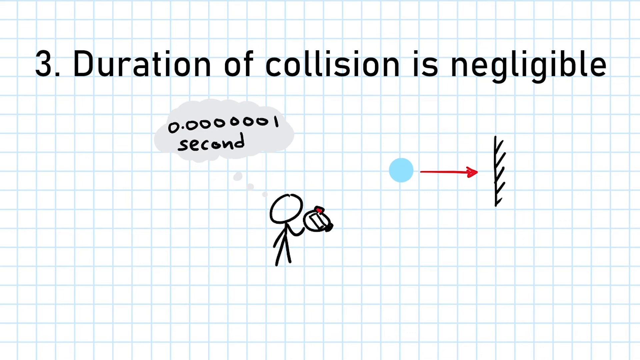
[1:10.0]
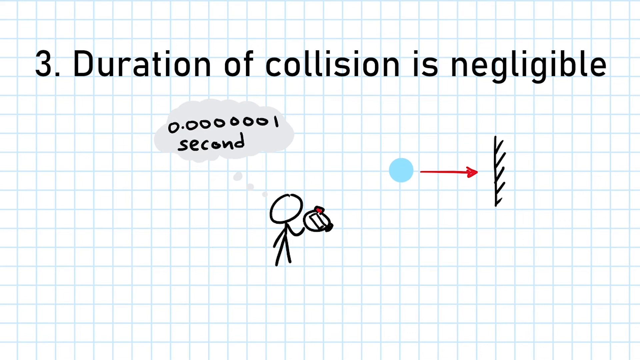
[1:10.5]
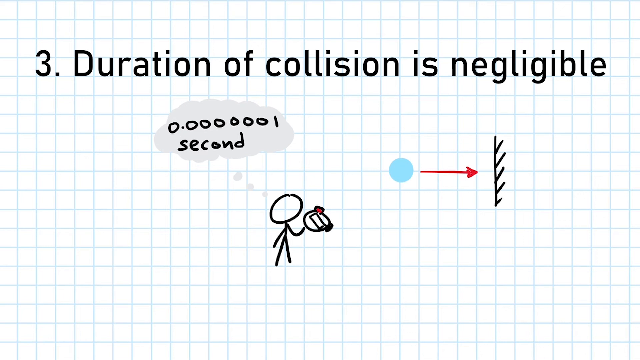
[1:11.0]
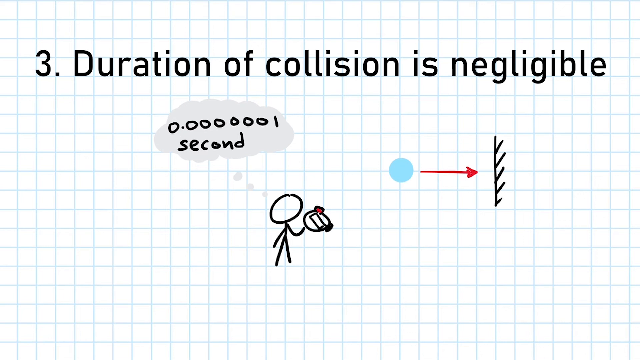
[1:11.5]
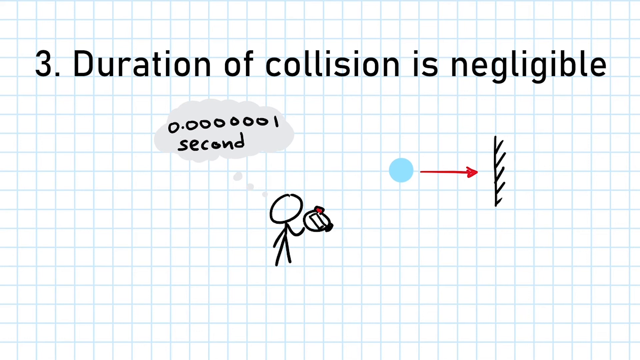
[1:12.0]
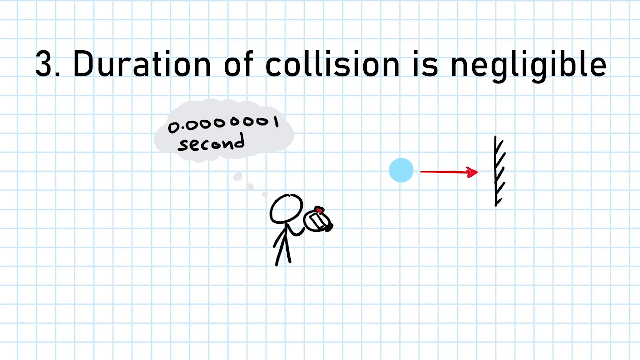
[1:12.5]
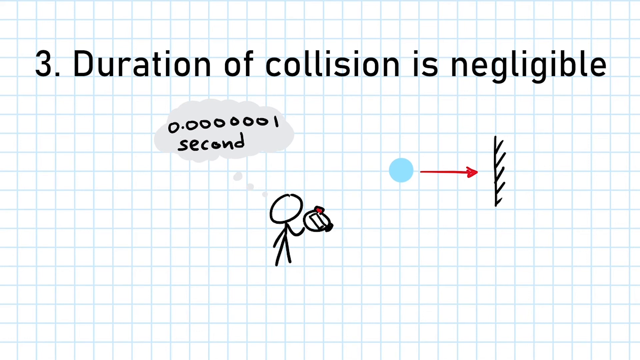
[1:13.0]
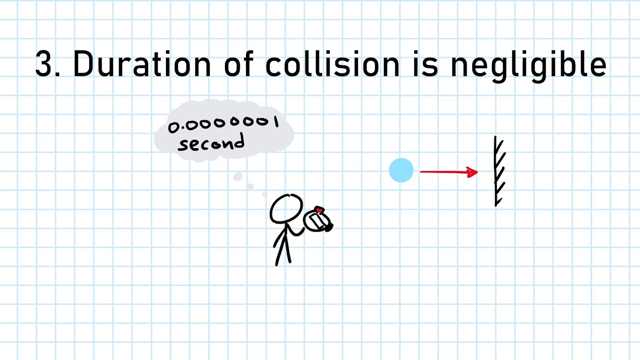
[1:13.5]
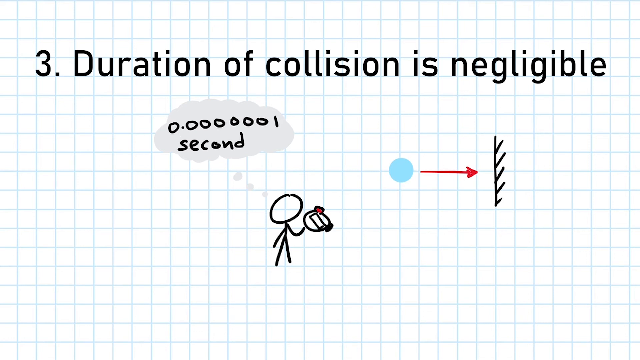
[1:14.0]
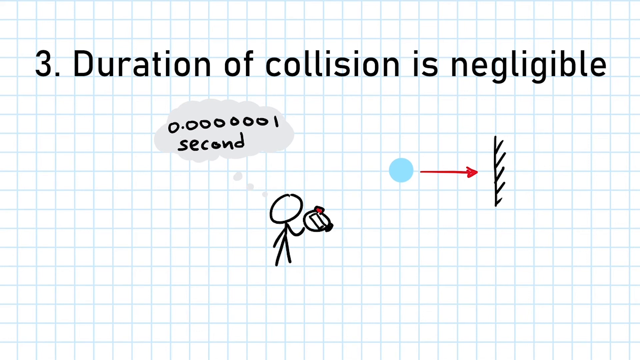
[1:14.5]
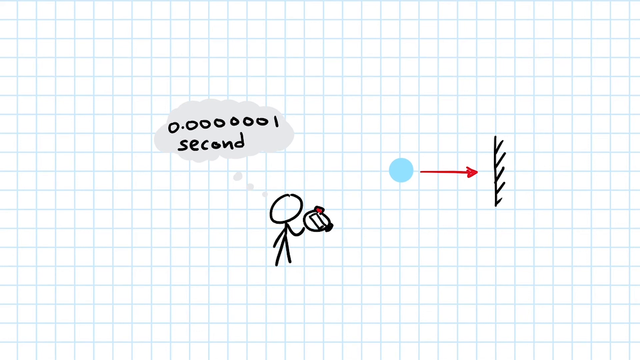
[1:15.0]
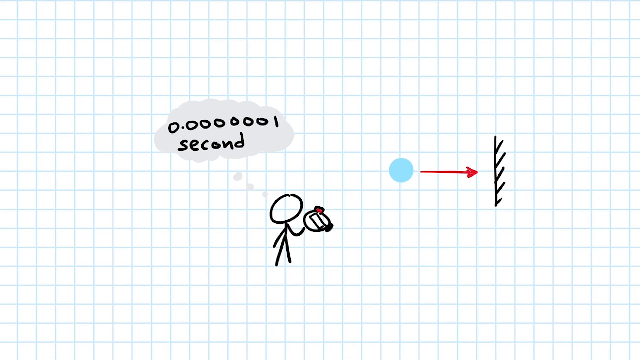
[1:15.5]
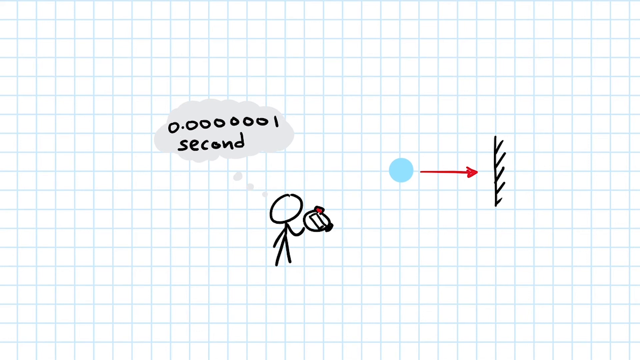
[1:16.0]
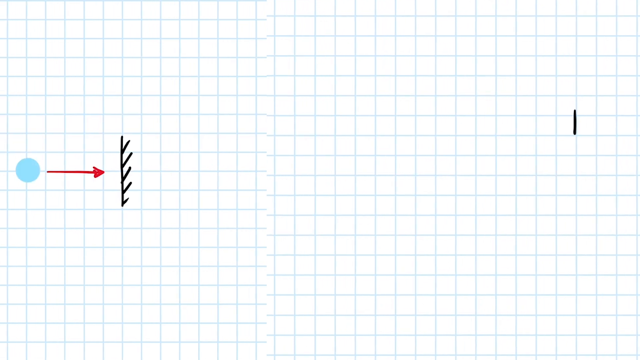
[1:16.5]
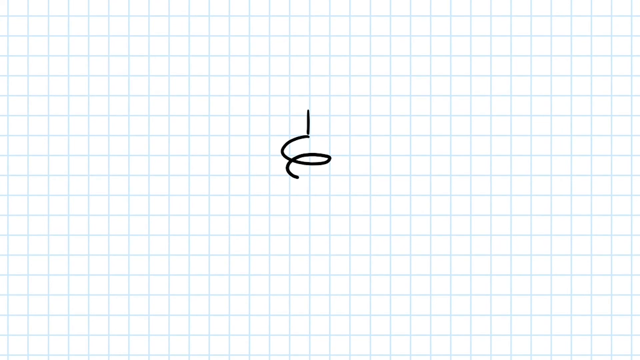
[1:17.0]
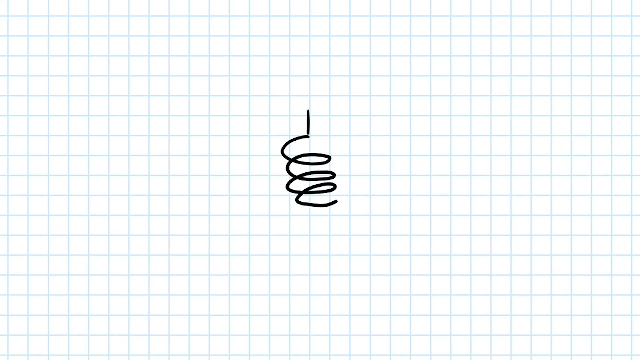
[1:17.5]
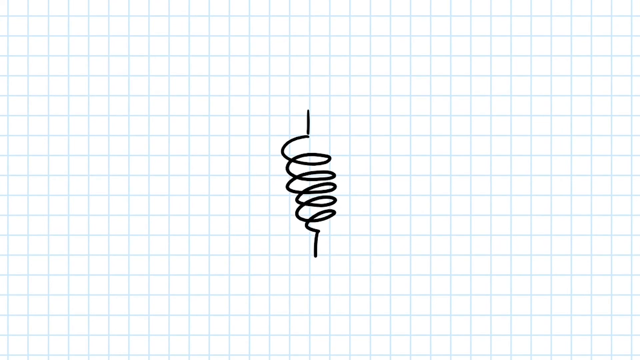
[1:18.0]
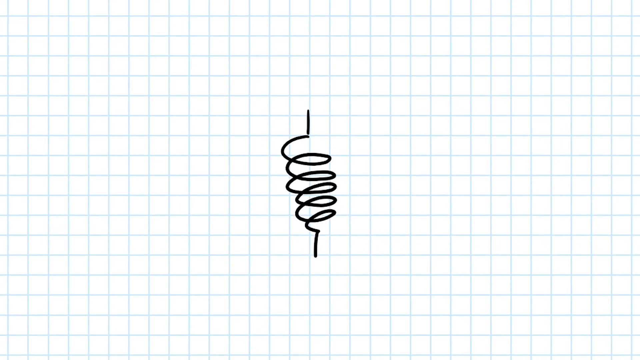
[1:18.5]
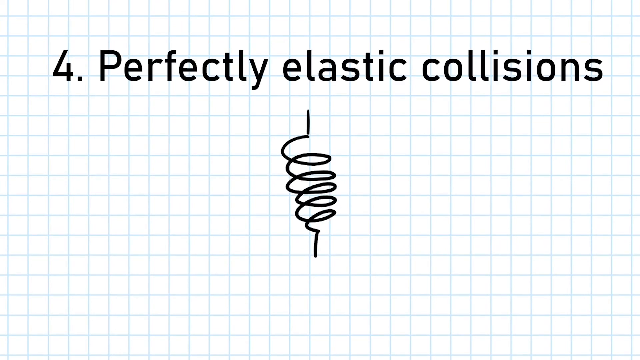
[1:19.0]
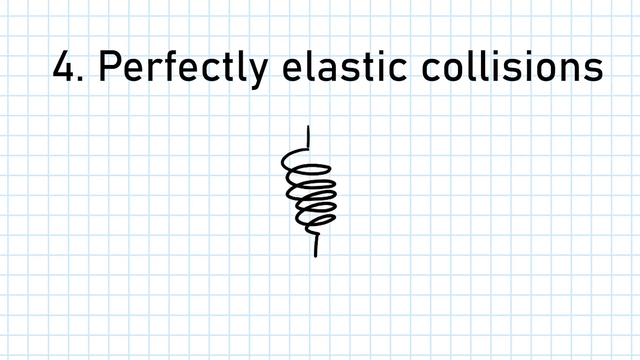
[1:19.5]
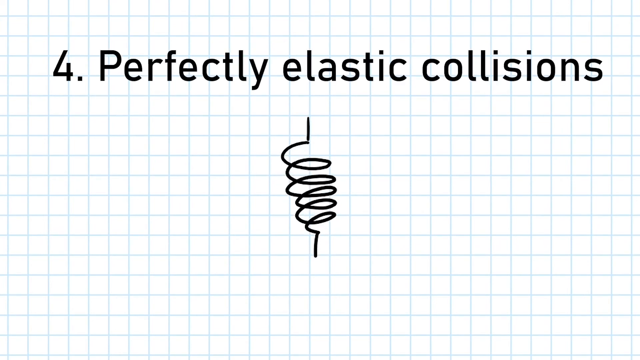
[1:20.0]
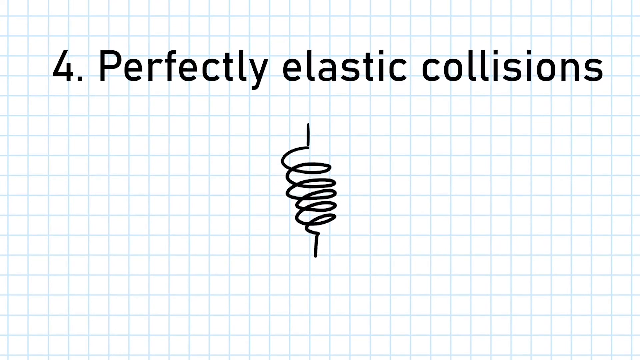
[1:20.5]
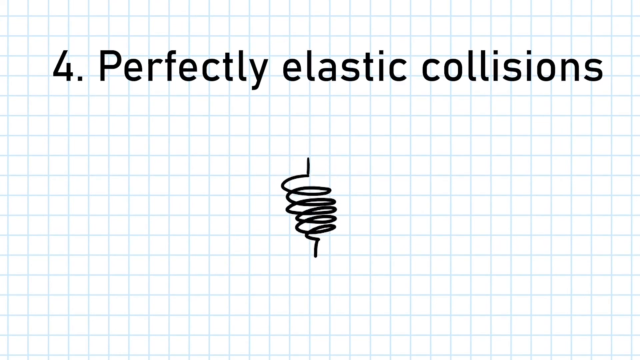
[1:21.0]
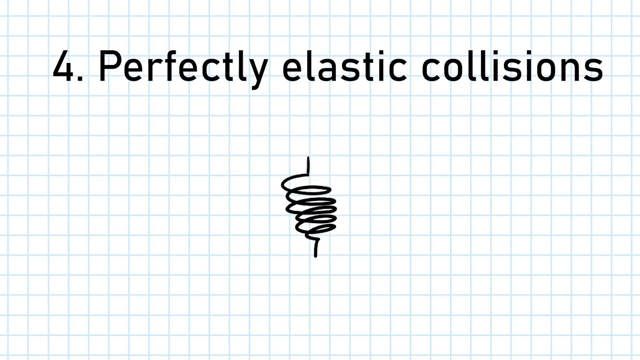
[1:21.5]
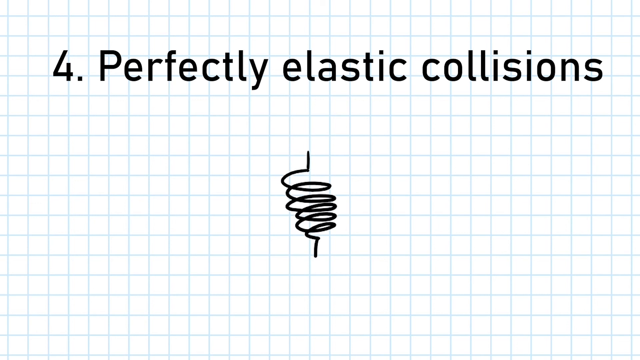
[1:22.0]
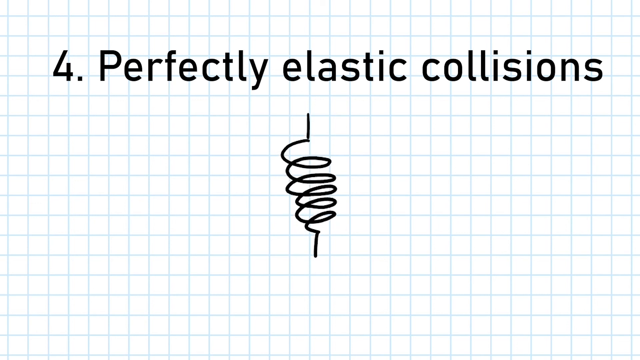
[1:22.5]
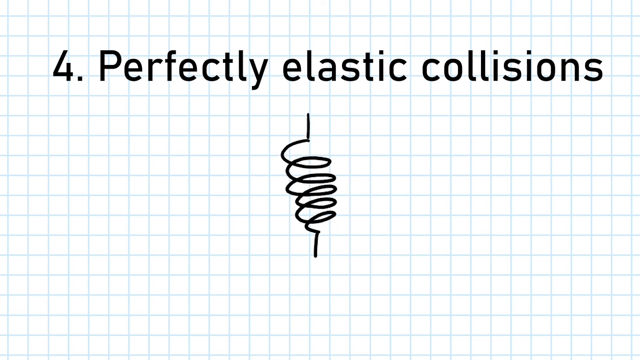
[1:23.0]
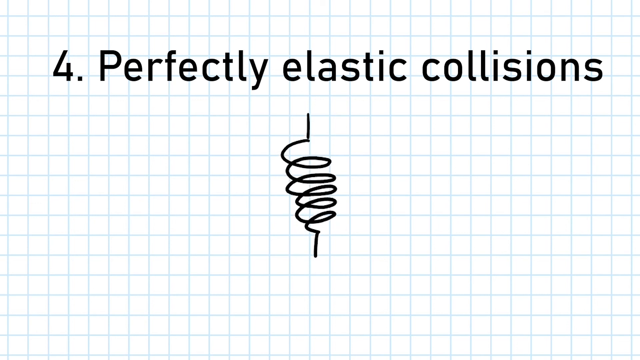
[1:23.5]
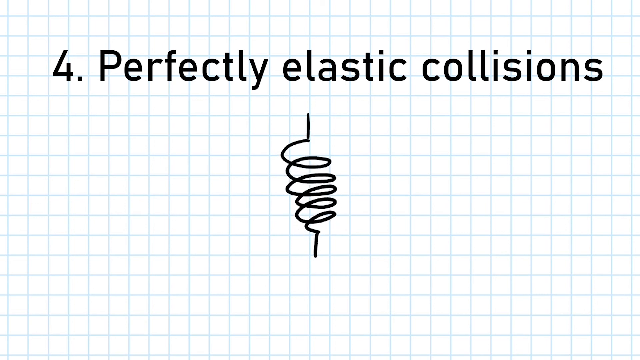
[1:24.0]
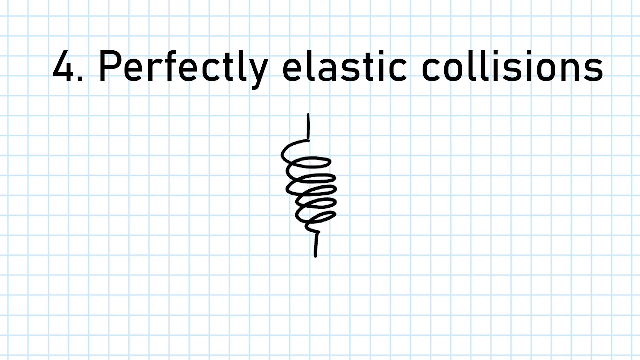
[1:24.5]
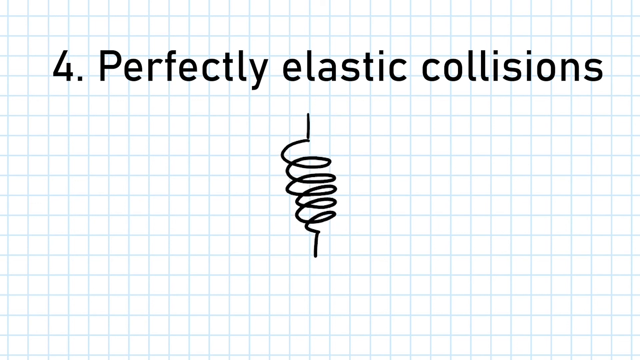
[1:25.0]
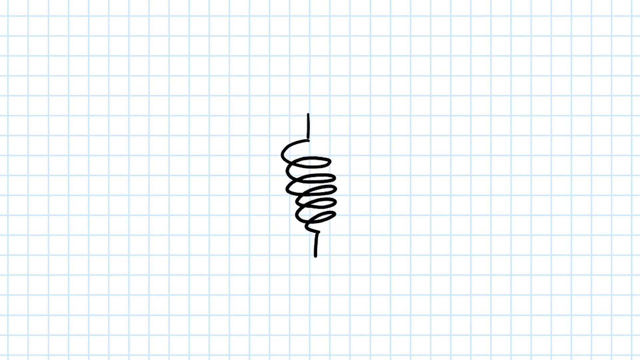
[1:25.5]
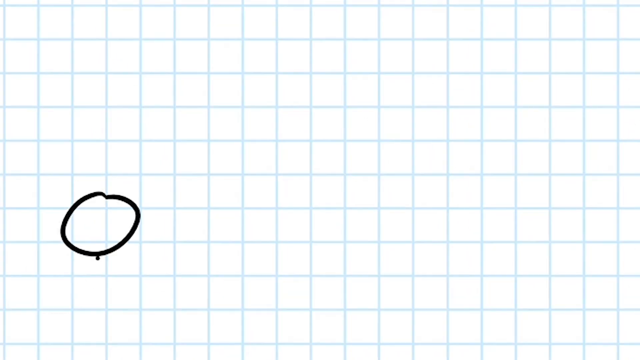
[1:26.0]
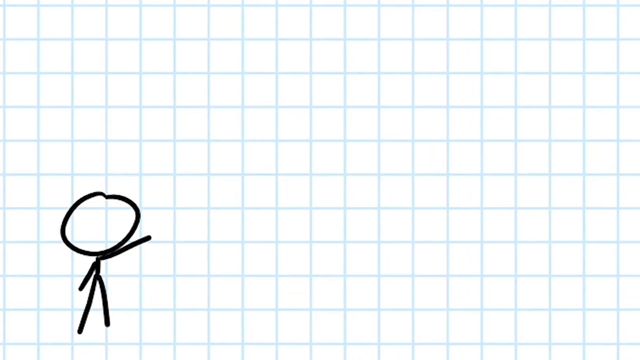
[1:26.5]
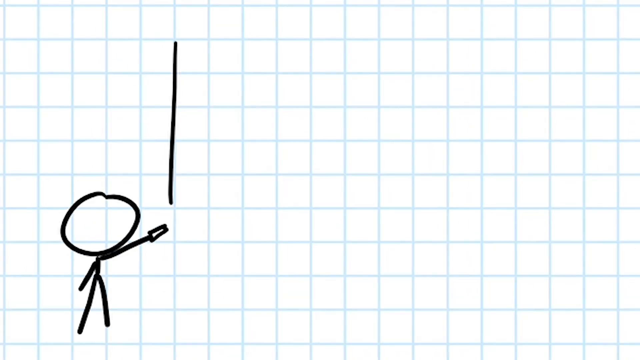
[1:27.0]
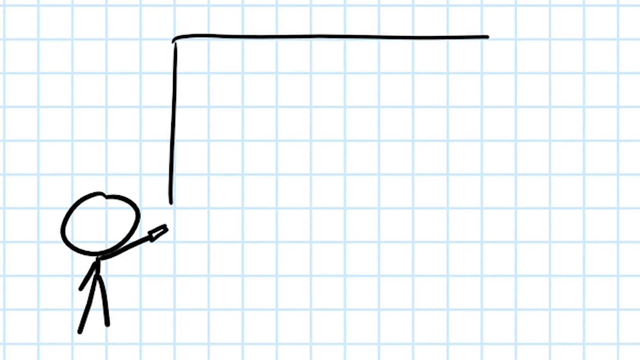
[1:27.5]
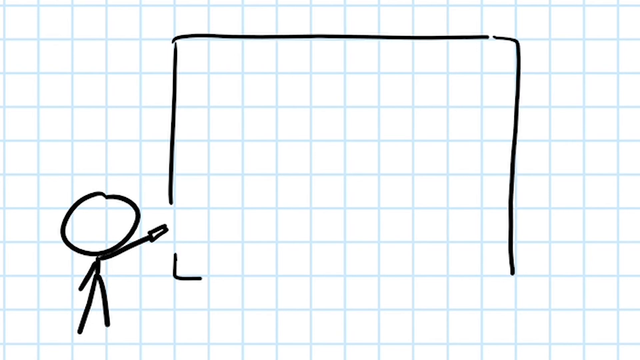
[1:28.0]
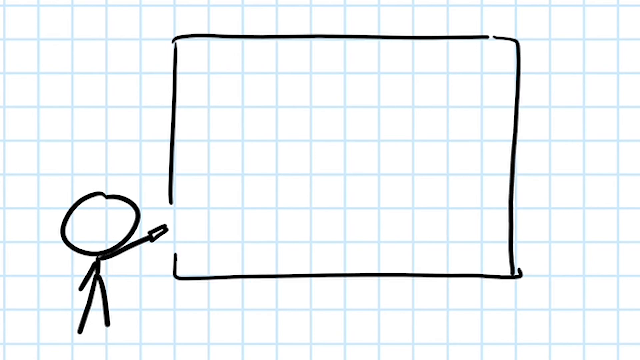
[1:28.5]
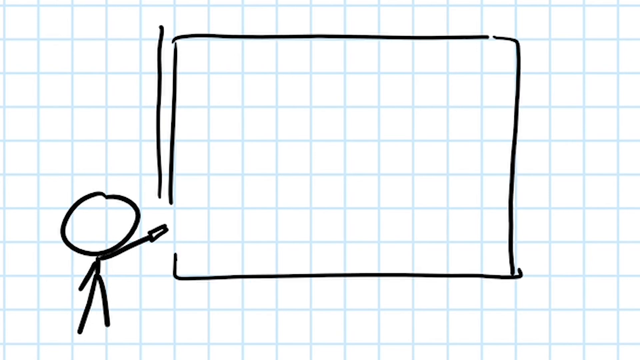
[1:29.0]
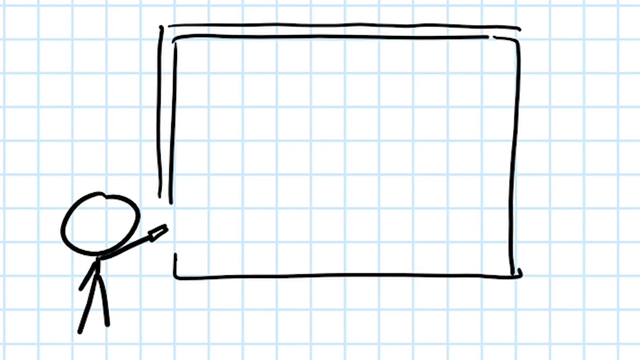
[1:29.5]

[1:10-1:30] The same picture of the stick man holding something in his left hand remains; the object is unclear, possibly a ball that kind of looks like a baseball, but it also looks like a disc. A gray, bubbly speech bubble comes out of the stick man and says "0.0000001 second". The view then swings over to the right again, where a sort of vertical pigtail is drawn with the text "perfectly elastic collisions", number four, and the pigtail kind of squeezes down. Afterward, a stick man at the bottom left points with his left hand, holding the chalk, probably about to write something on the board again.